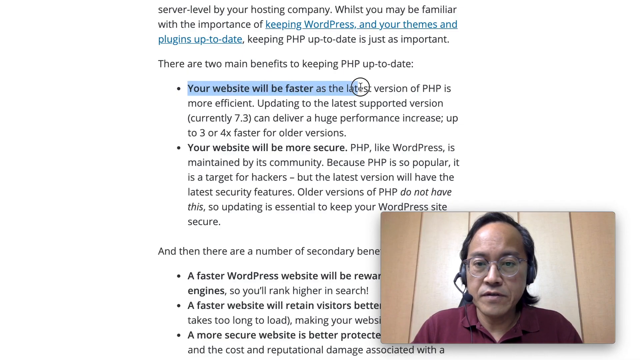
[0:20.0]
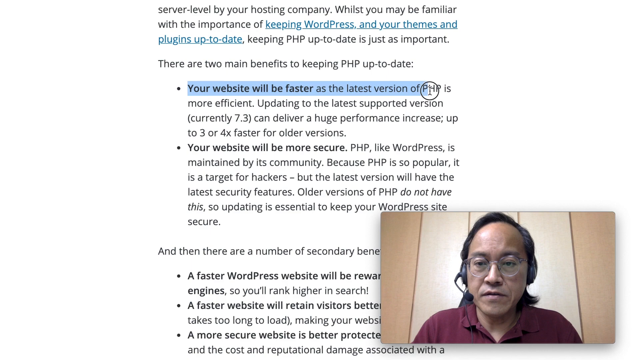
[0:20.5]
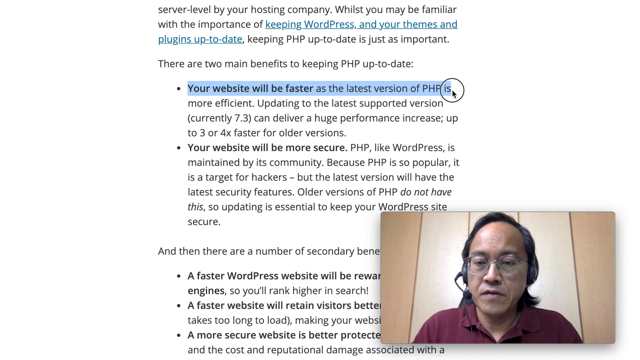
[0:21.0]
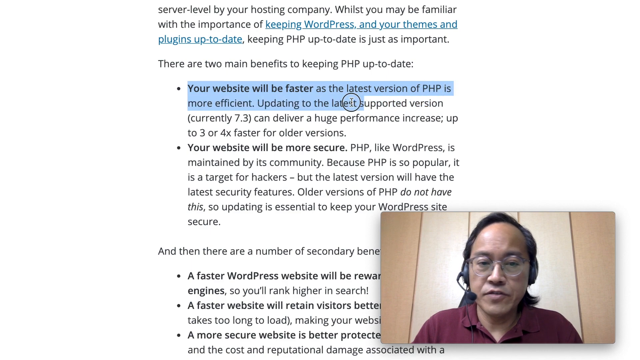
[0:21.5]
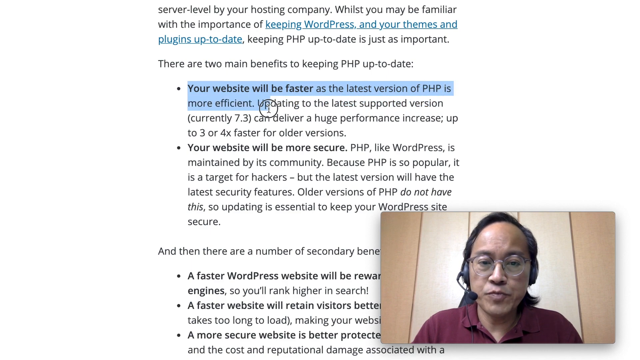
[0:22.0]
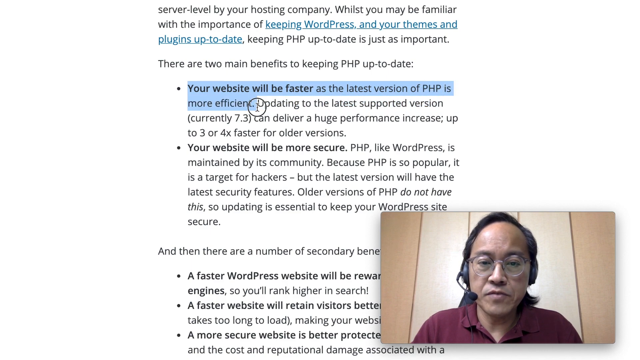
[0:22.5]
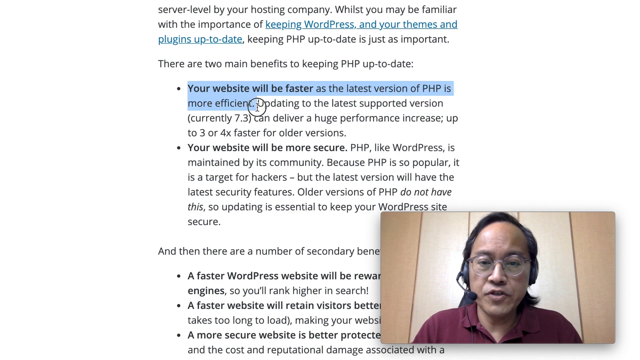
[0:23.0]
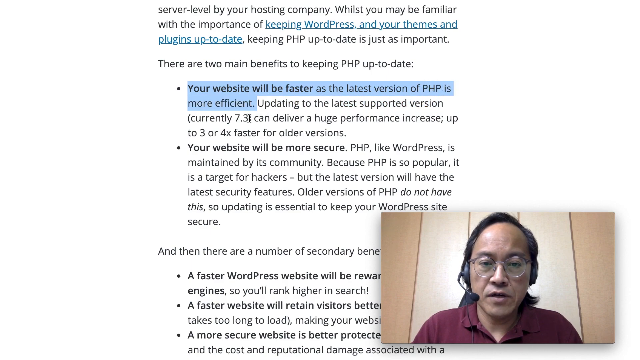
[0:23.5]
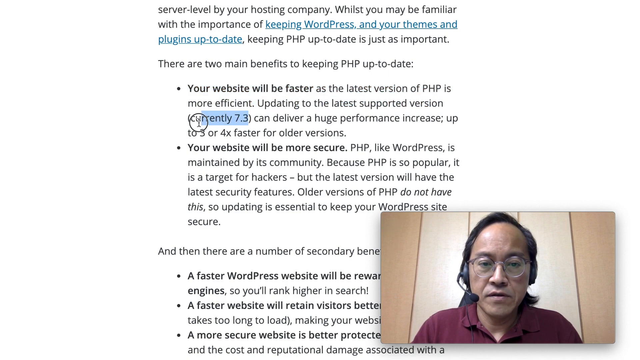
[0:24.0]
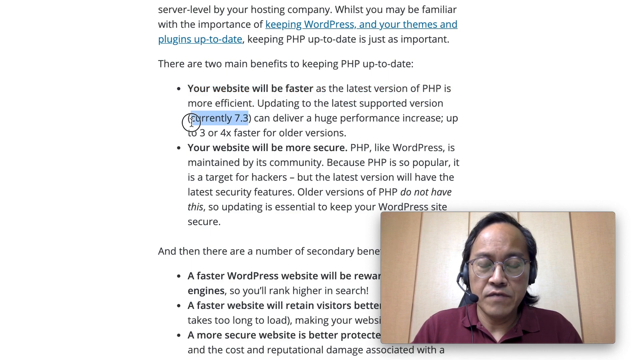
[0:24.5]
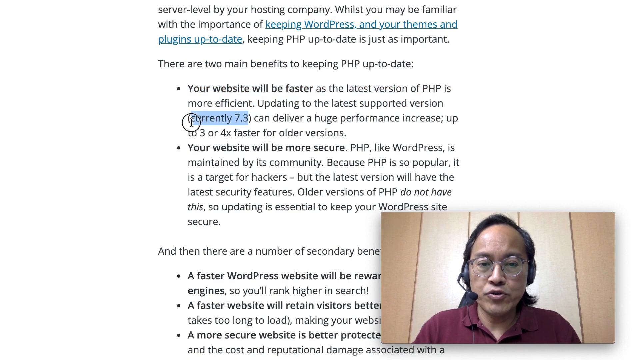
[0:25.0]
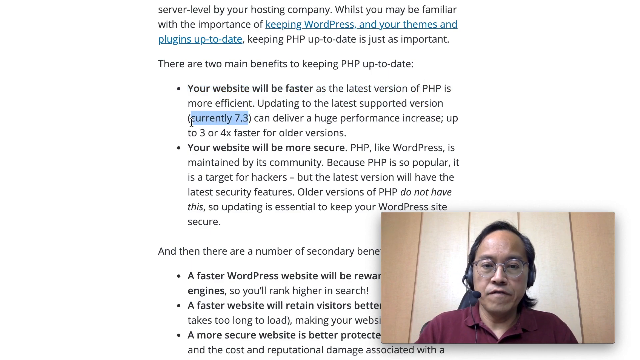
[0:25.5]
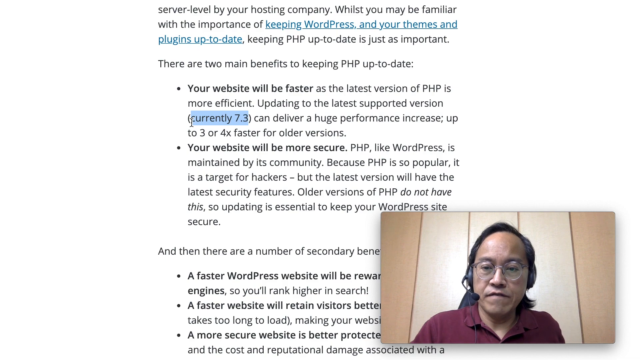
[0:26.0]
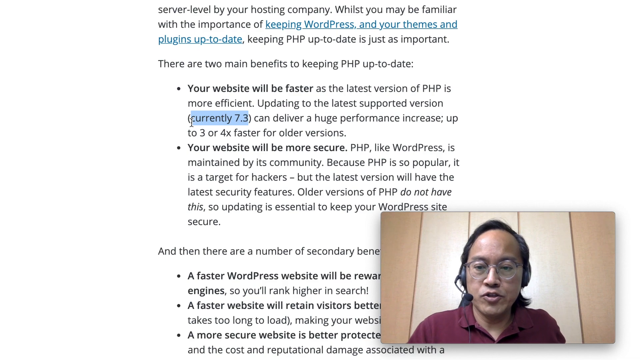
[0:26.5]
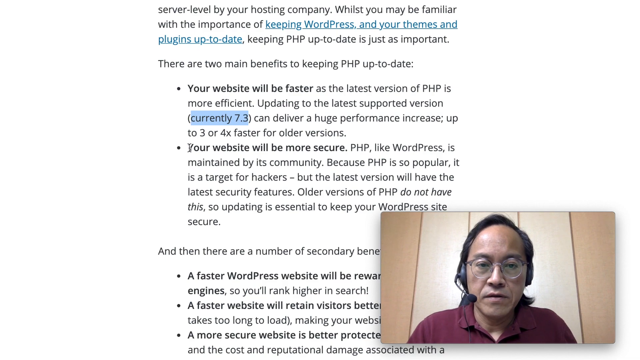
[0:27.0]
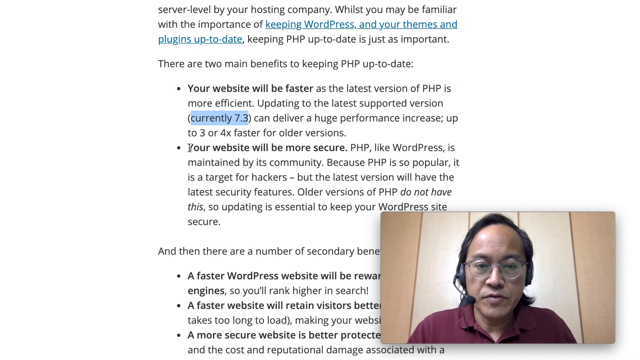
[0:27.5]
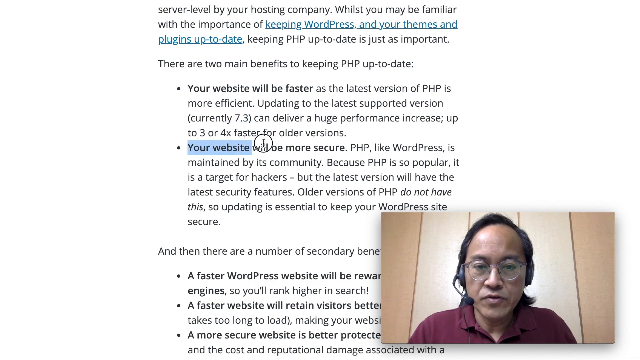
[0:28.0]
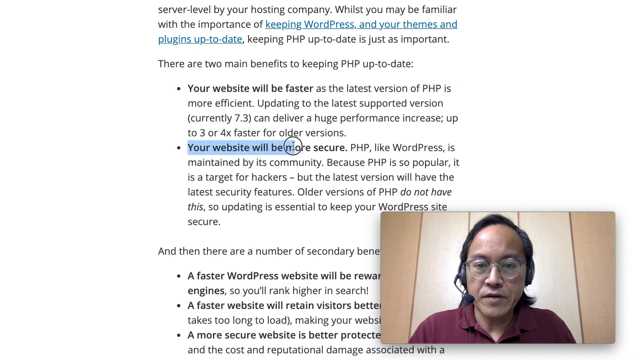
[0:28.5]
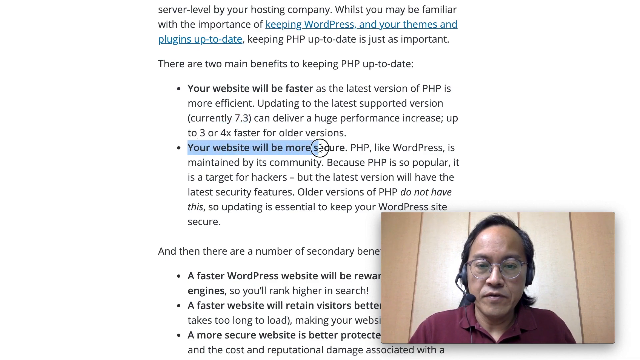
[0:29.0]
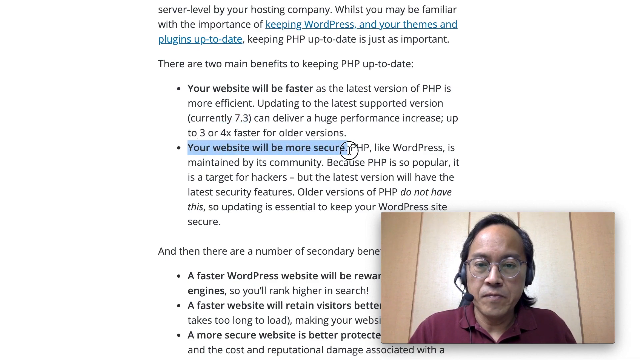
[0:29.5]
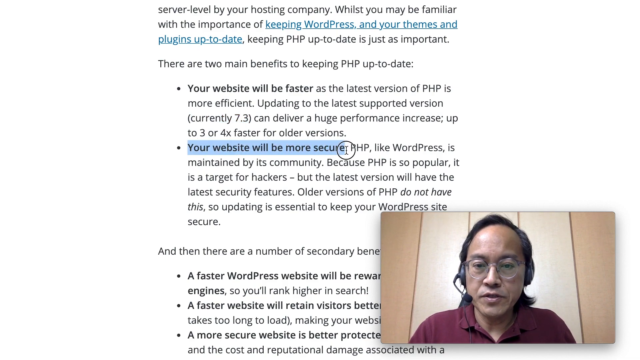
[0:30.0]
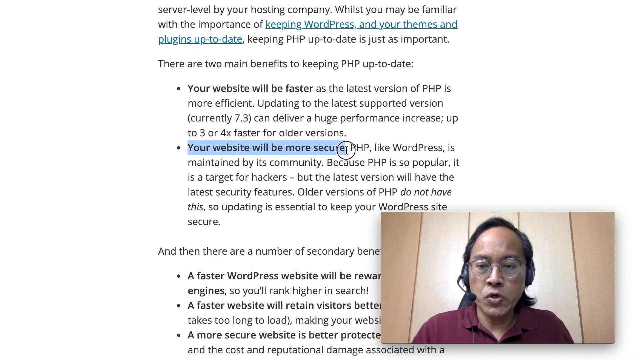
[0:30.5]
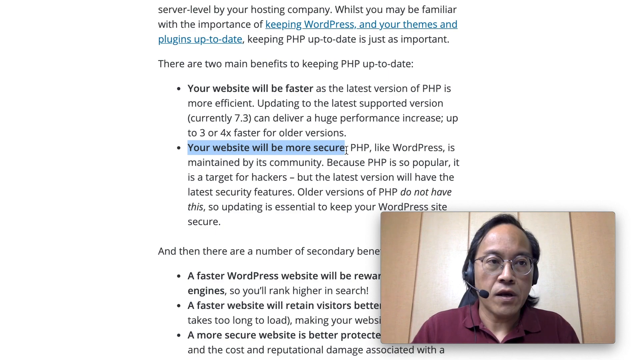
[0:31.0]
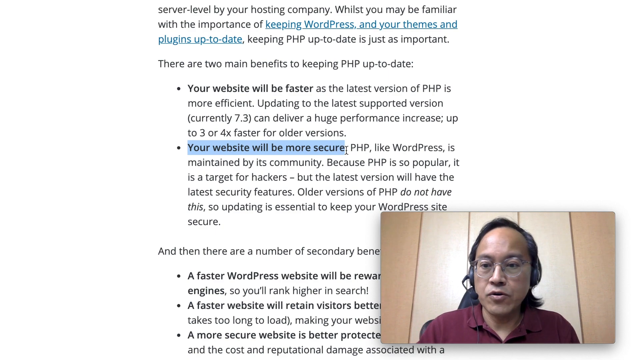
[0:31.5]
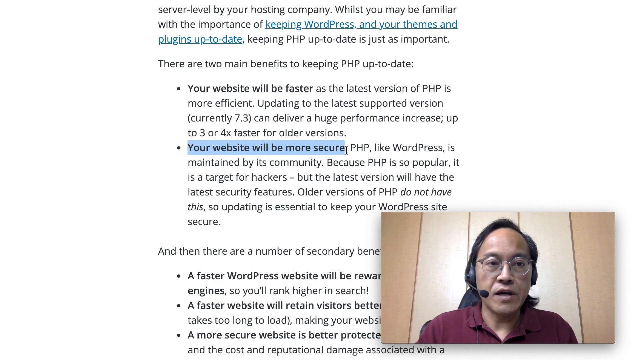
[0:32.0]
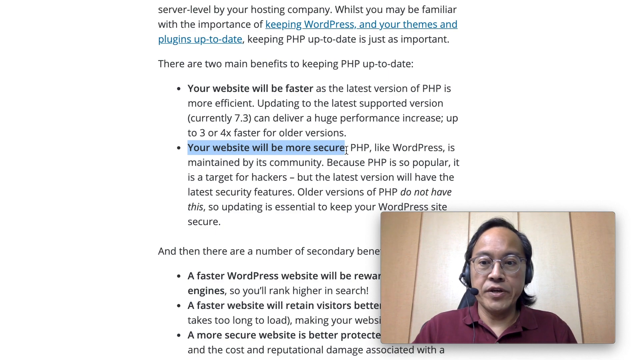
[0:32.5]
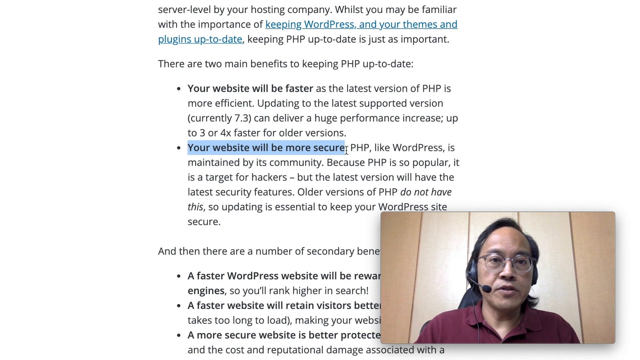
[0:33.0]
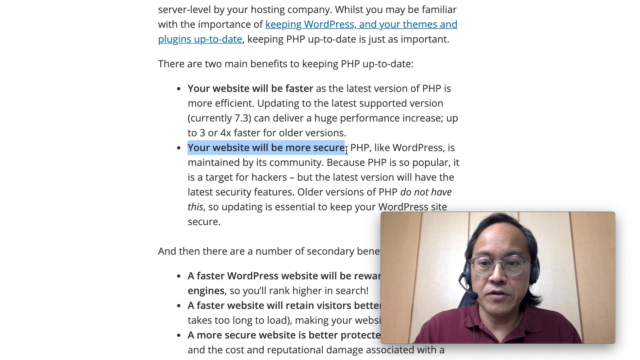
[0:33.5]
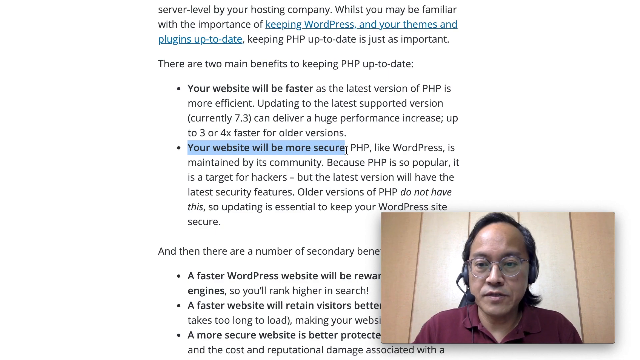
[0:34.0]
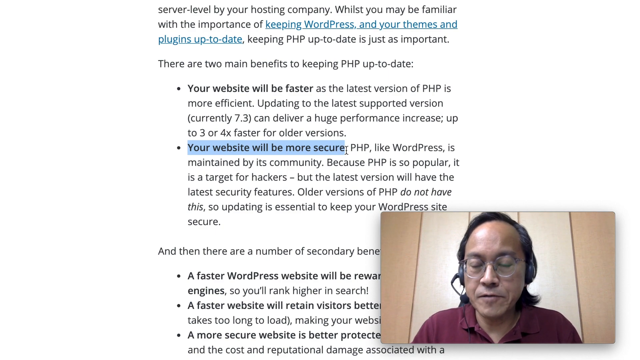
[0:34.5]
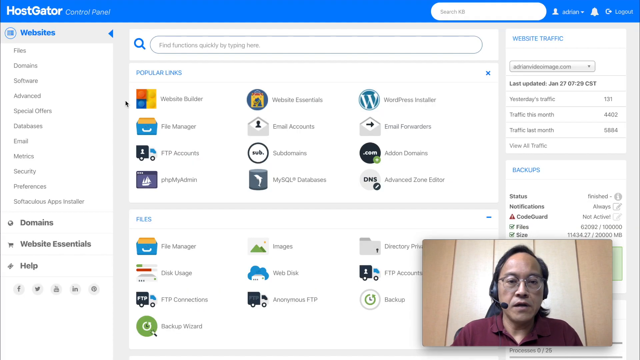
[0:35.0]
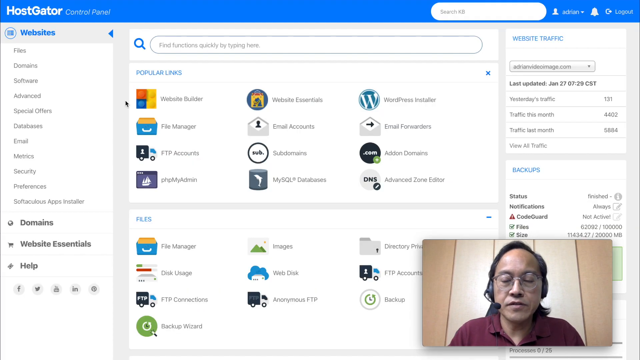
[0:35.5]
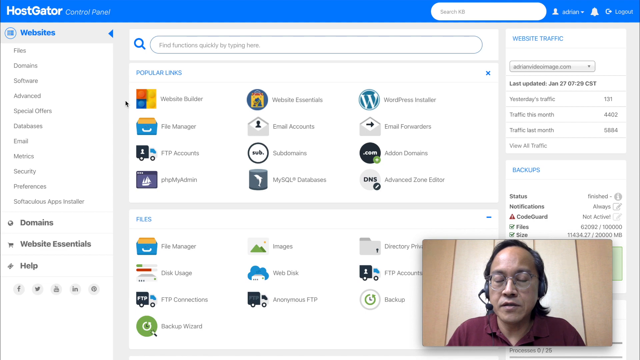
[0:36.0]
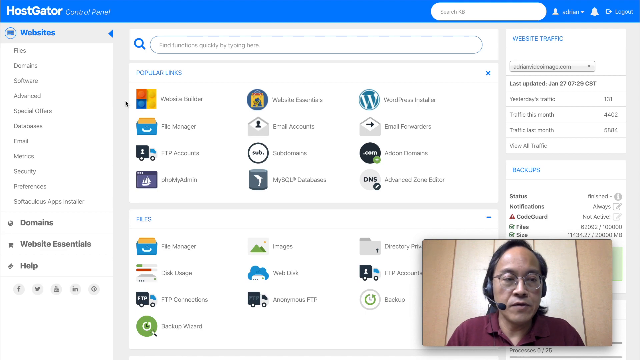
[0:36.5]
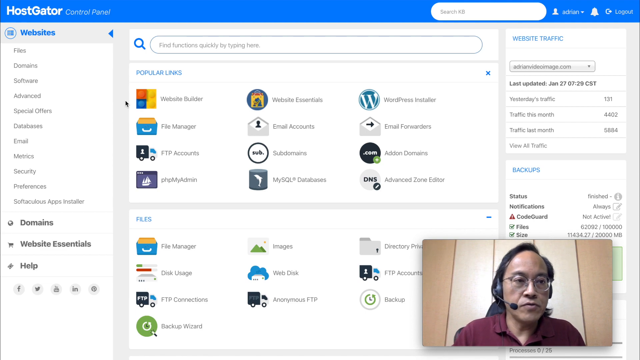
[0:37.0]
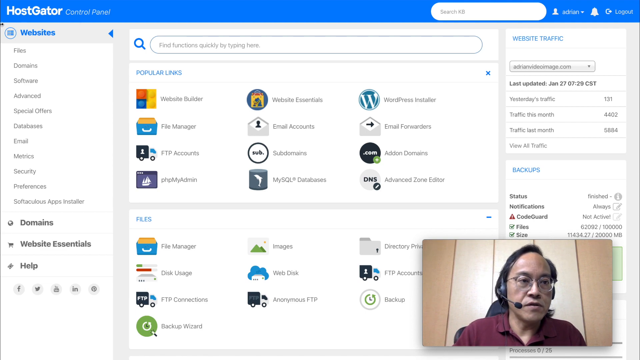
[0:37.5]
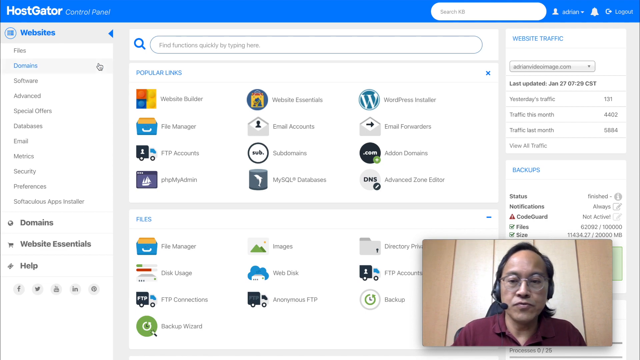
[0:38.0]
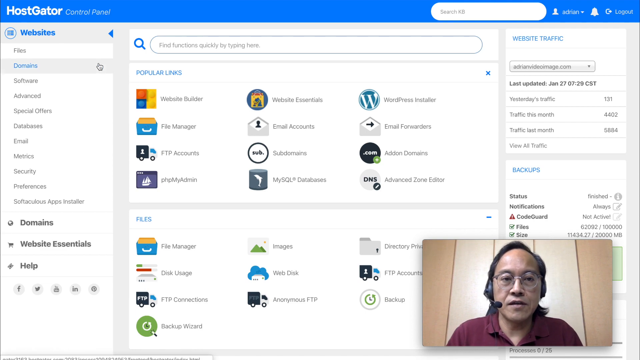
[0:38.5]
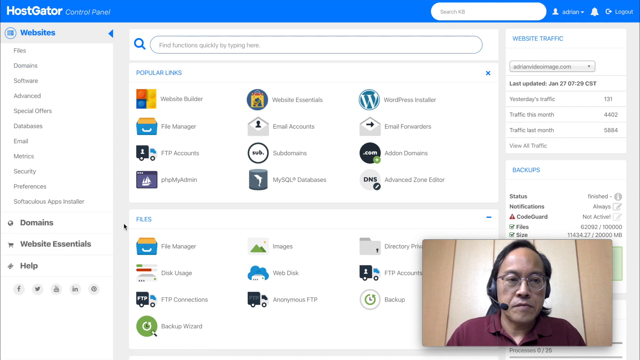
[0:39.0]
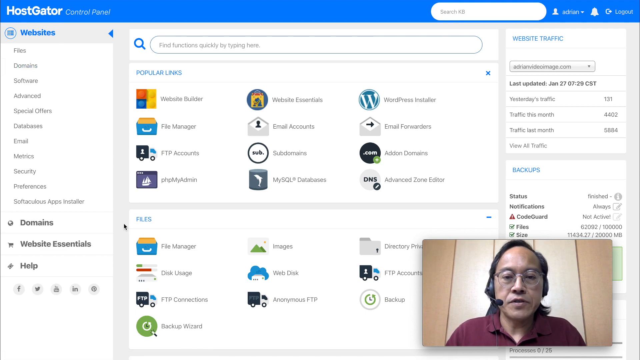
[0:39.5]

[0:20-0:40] A man with a headset is at the bottom of the screen. He is an older man wearing a maroon shirt and glasses, and he looks Asian or Indian. On-screen text reads "there are two main benefits to keeping PHP up to date. Your website will be faster as the latest version of PHP is more efficient," "your website will be more secure," and "PHP, like WordPress, is maintained by its community." He highlights some of the text. He then goes to the HostGator website, which has popular links, and appears to be searching on the HostGator page.